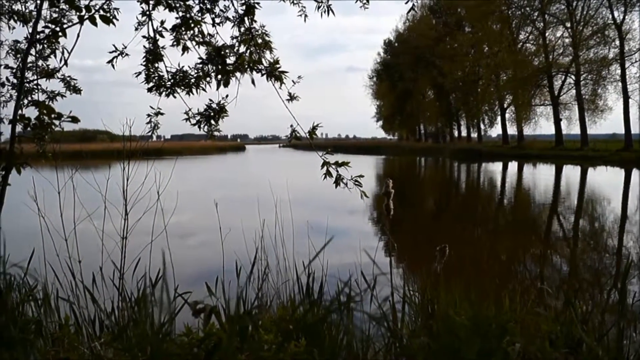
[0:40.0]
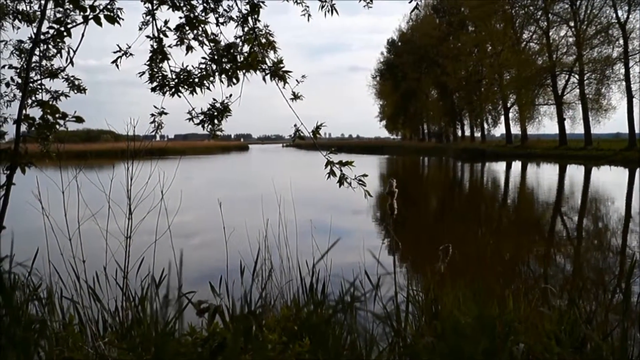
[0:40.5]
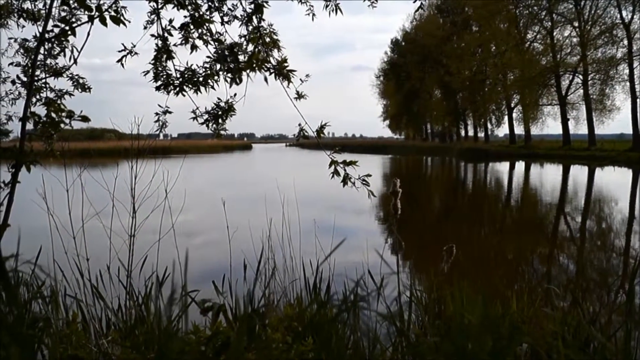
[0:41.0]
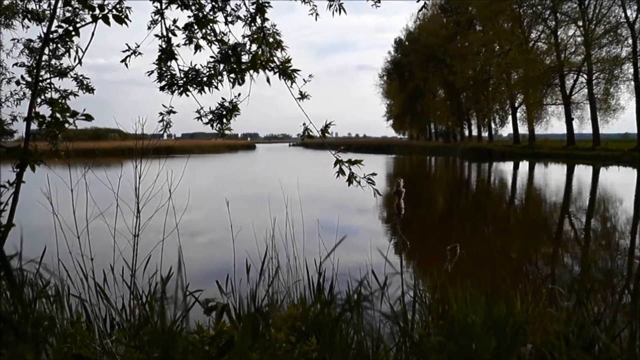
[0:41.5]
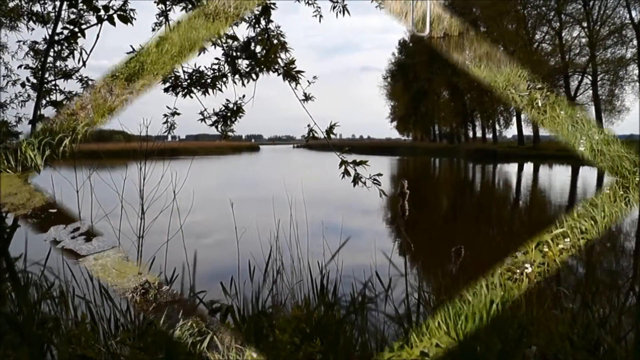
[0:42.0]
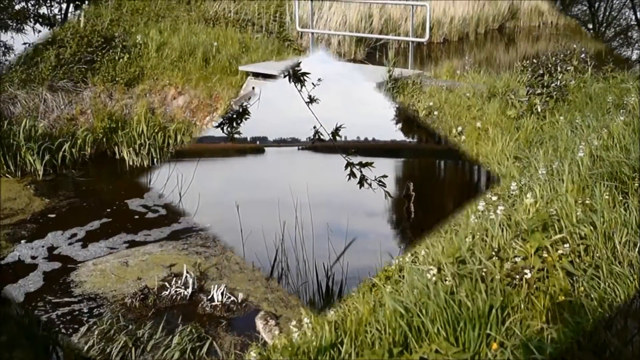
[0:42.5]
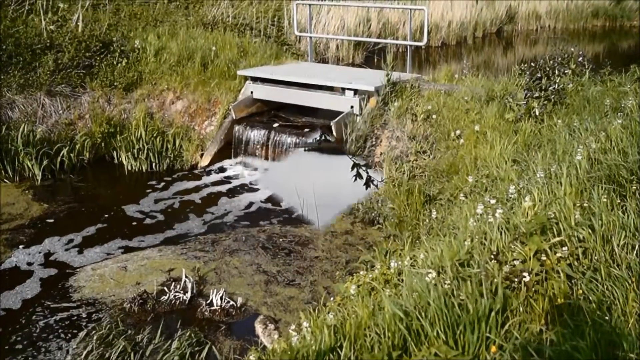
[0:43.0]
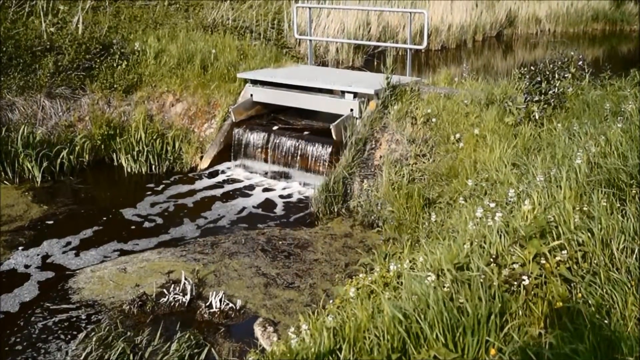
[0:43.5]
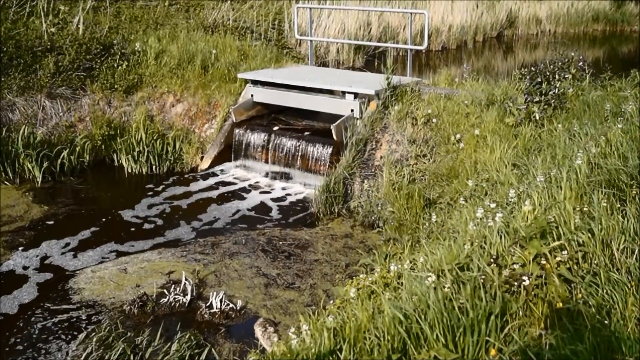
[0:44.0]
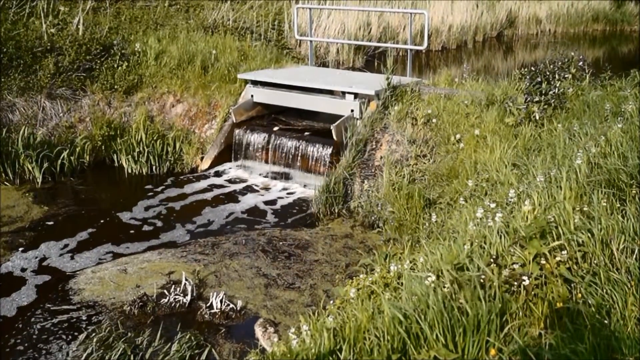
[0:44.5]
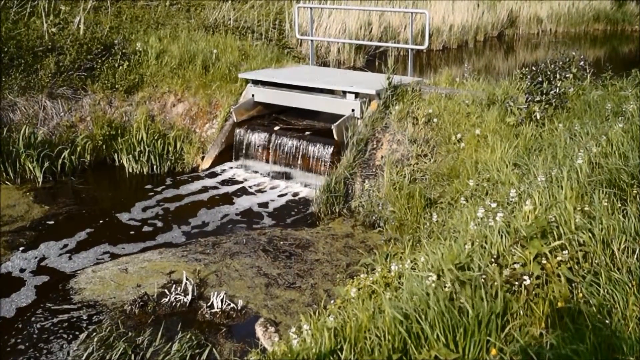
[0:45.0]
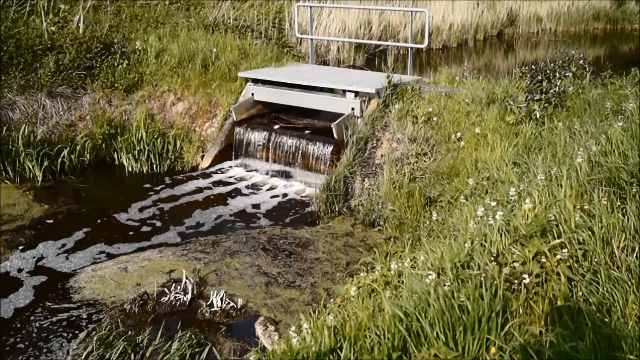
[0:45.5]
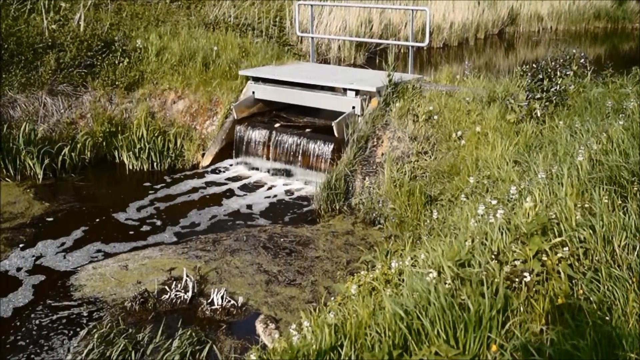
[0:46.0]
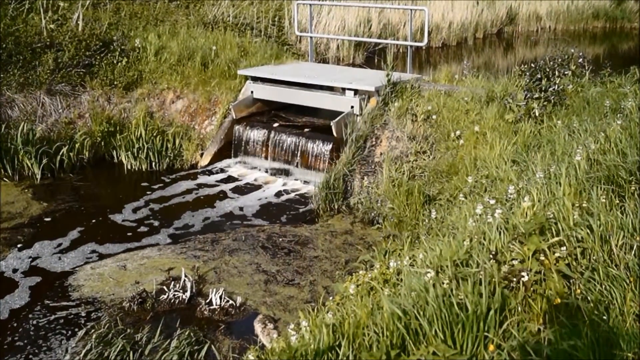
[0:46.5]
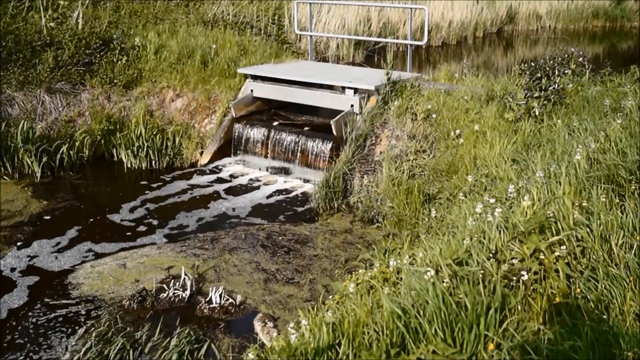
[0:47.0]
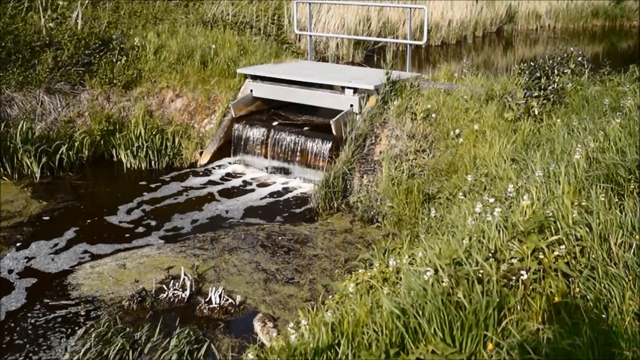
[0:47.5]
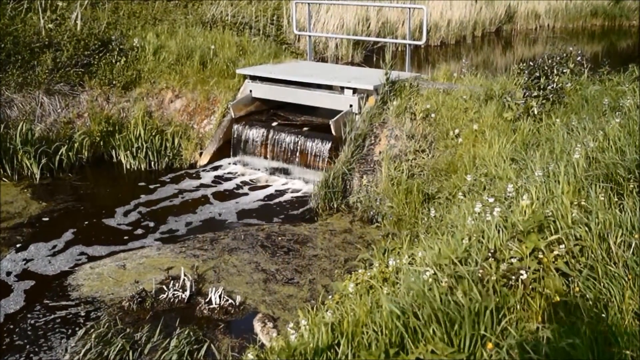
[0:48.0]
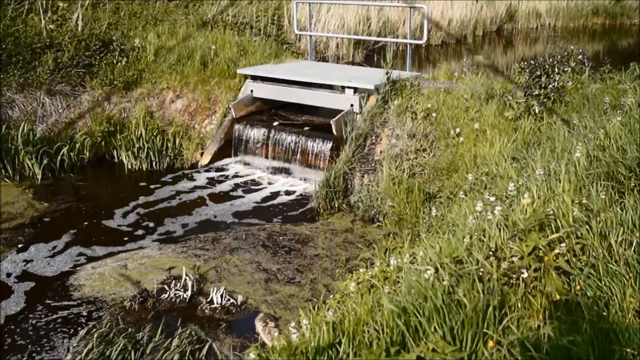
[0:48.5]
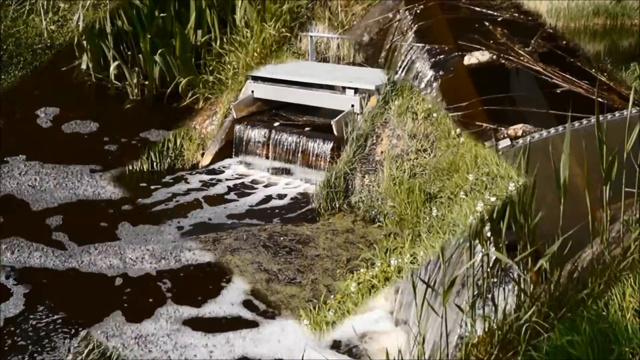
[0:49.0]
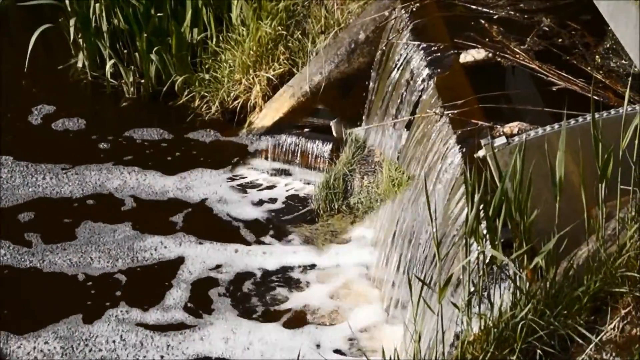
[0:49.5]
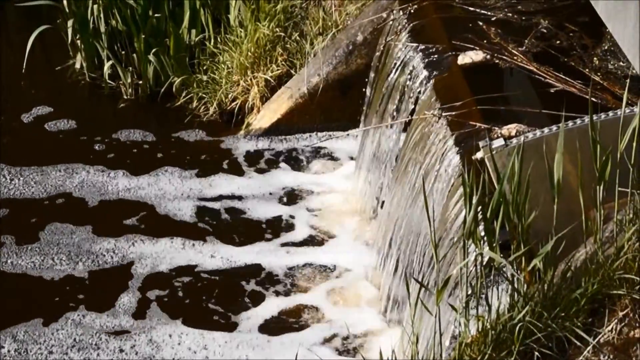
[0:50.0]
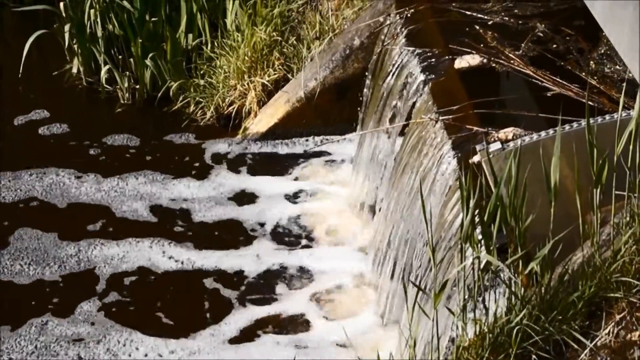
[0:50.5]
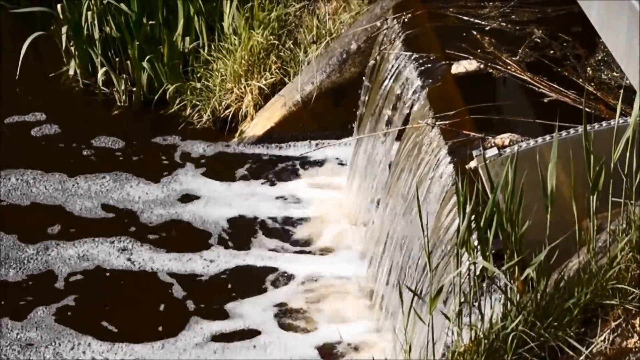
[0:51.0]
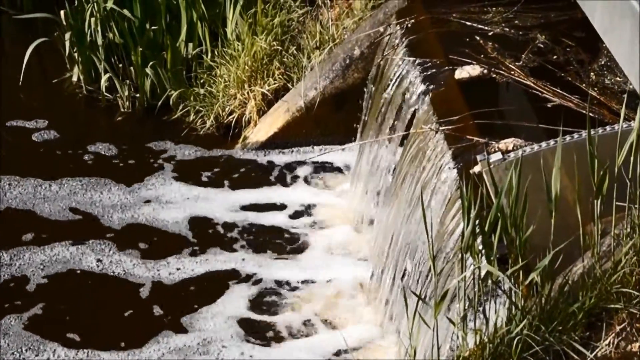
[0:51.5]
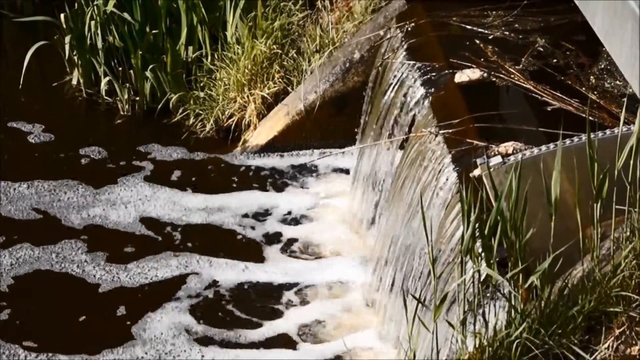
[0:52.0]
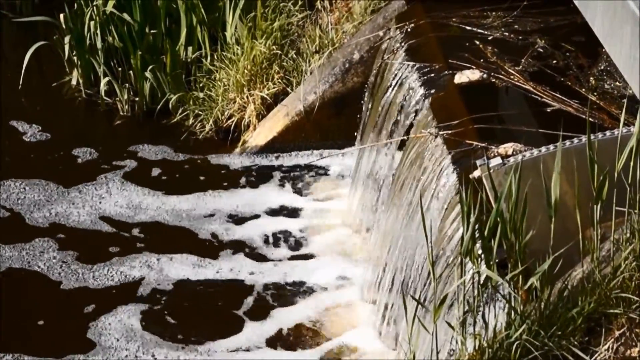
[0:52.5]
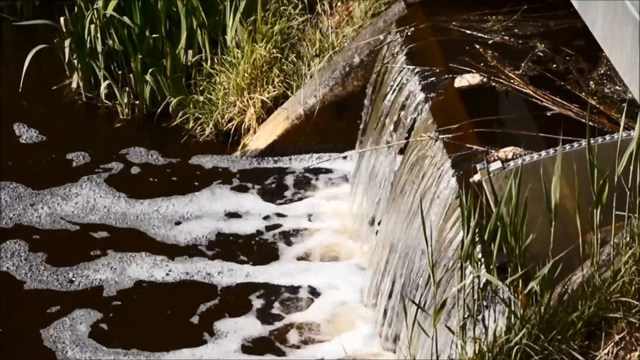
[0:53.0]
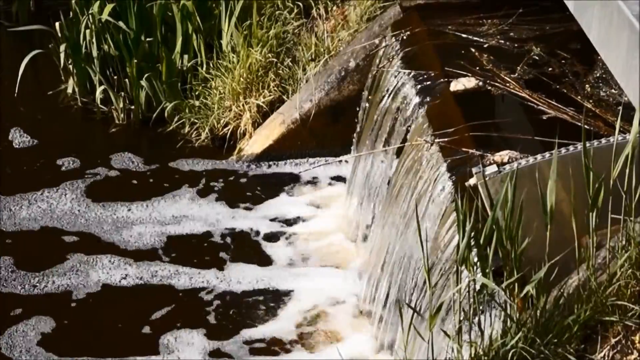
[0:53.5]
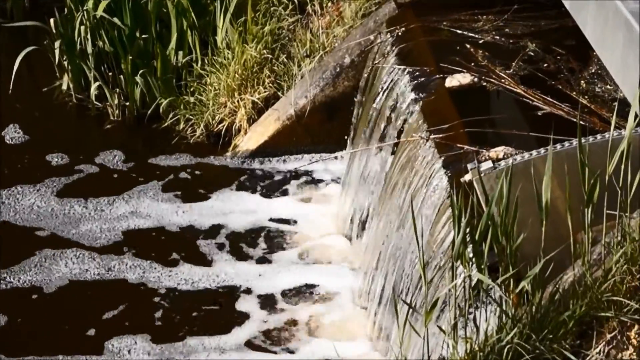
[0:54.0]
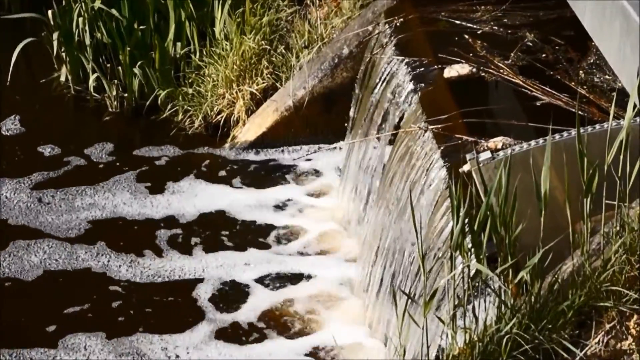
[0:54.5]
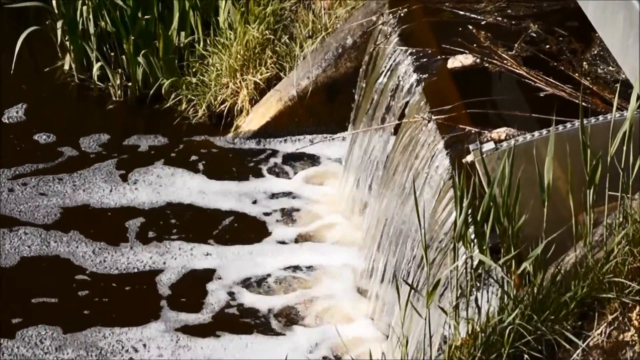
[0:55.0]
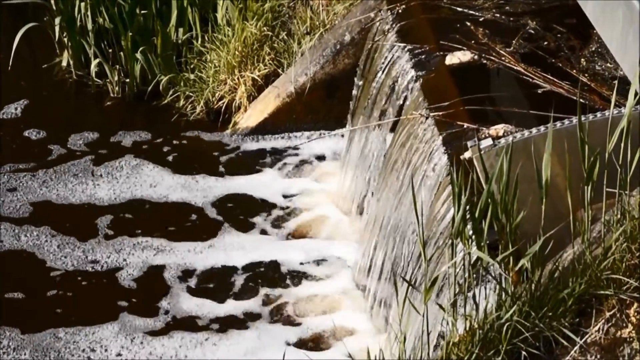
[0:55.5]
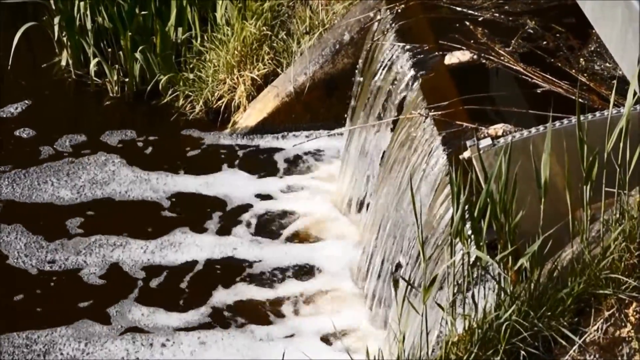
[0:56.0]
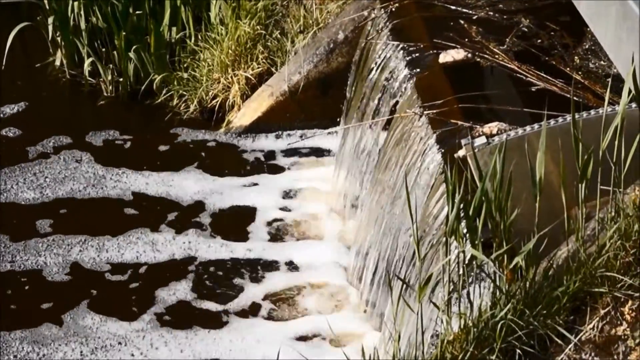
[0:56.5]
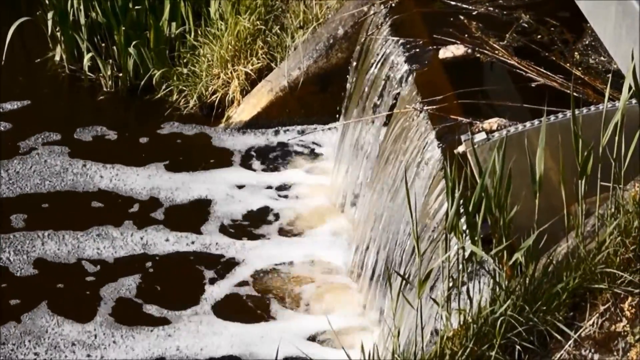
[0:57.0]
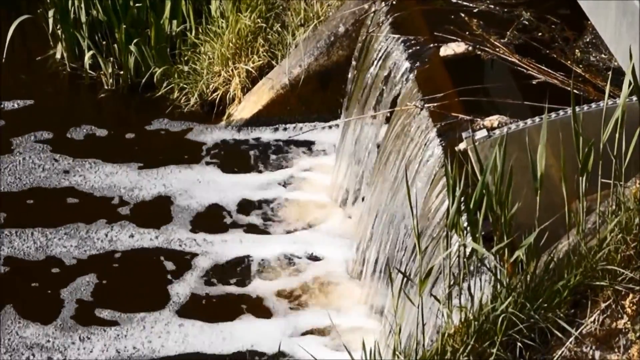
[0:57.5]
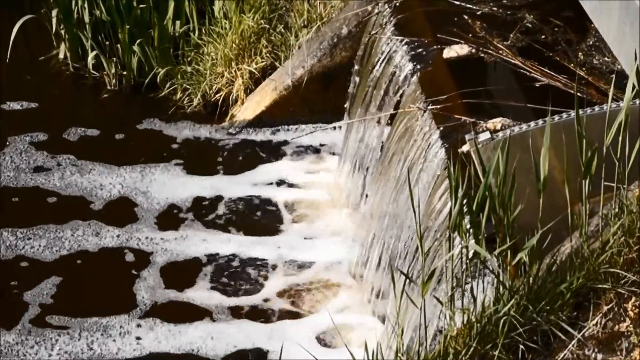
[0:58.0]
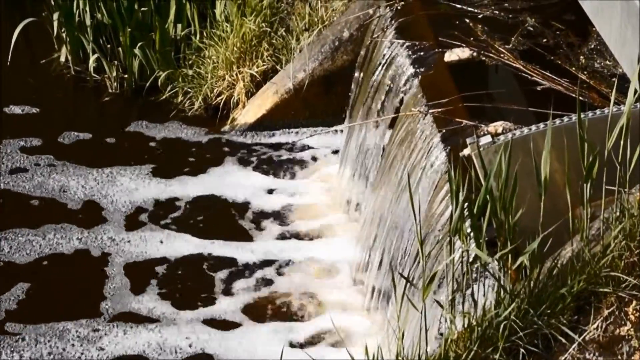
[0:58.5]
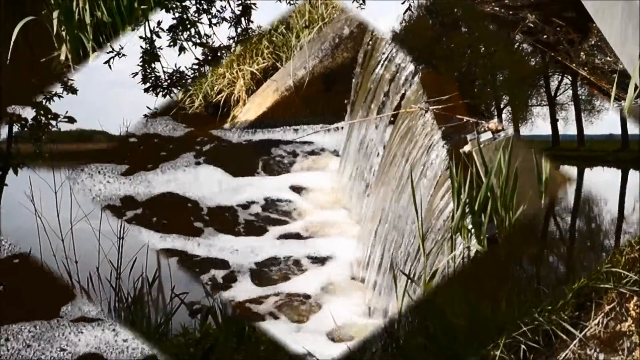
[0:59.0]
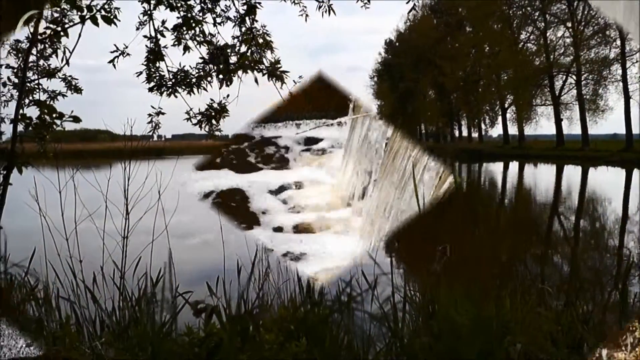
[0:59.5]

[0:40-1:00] What looks like a view of a river appears, with a body of water in front and an embankment on the other side. Around 10 straight trees with a lot of leaves stand on the embankment at the top right of the frame, a cloudy sky is at the top, long grass fills the foreground, and branches and leaves come down at the top, so the viewpoint is underneath a tree. A diamond-shaped transition leads to a little stream with a dam and a body of water behind it at the top right; the stream flows toward the bottom left. In the middle is the dam with a little man-made waterfall about a meter tall, with concrete on its side and a lot of grass at the top left and bottom right around the stream. Some white bubbles appear where the water falls. Another diamond transition leads to a close-up of the side of the man-made dam/waterfall: water pours down with a little white foam at the bottom as it flows to the left, the dam is on the right side with a bit of concrete beside it, and grass is at the top and bottom right. A diamond transition then goes back to the first river scene, showing the water, the trees on the other embankment and the sky at the top middle.